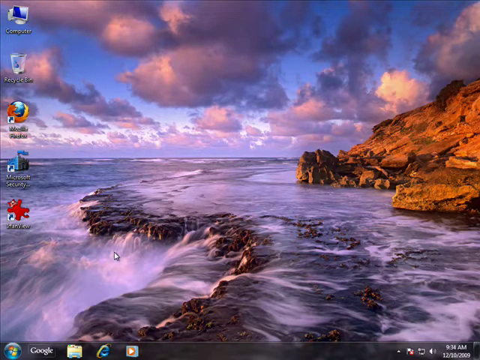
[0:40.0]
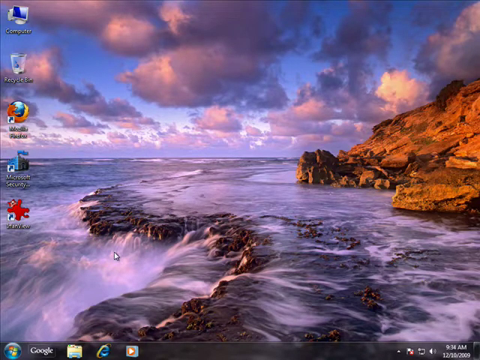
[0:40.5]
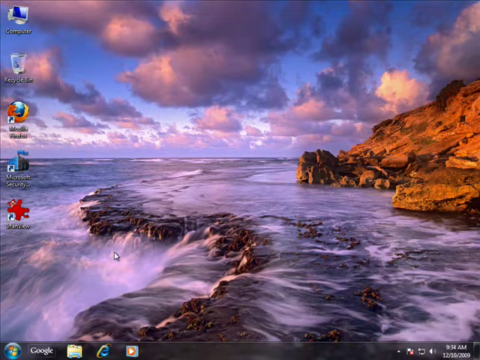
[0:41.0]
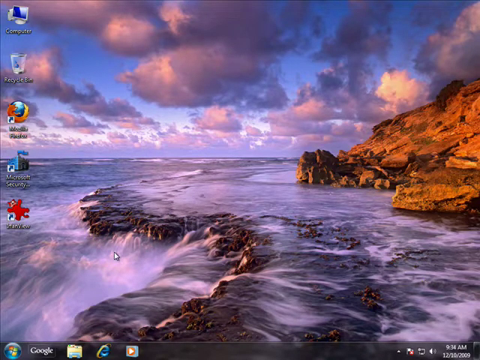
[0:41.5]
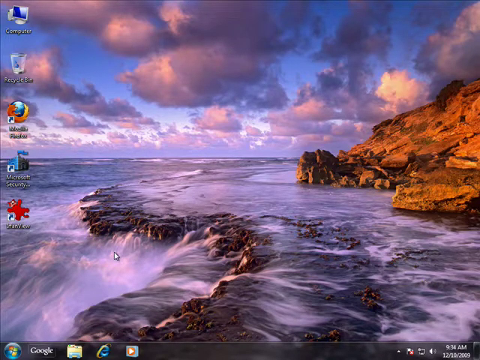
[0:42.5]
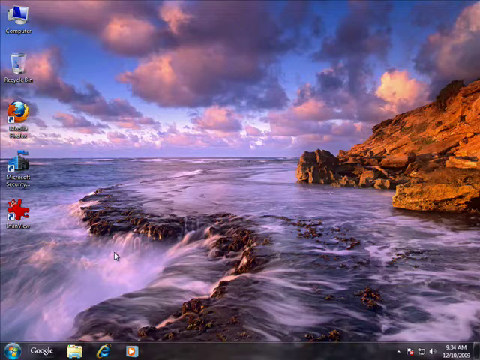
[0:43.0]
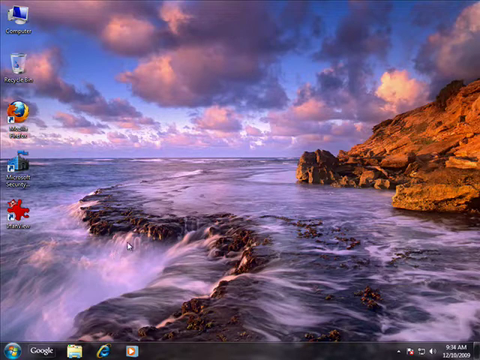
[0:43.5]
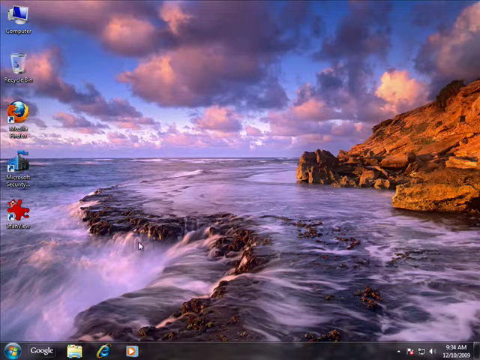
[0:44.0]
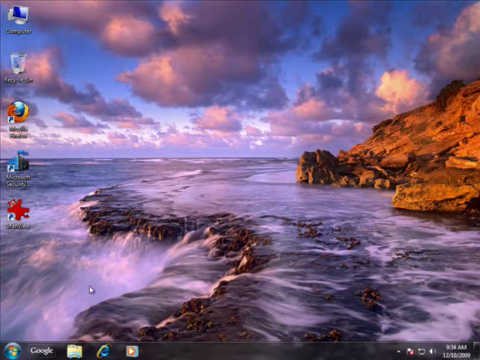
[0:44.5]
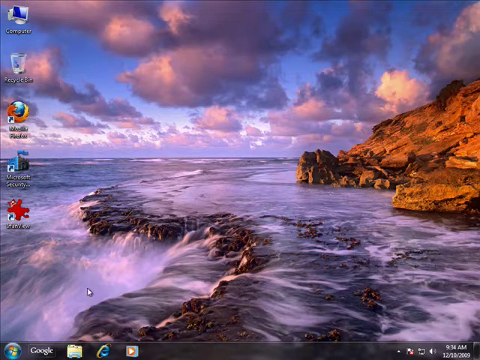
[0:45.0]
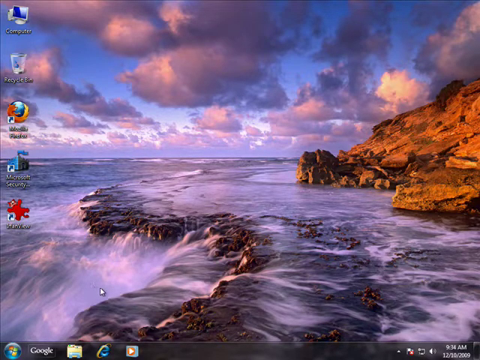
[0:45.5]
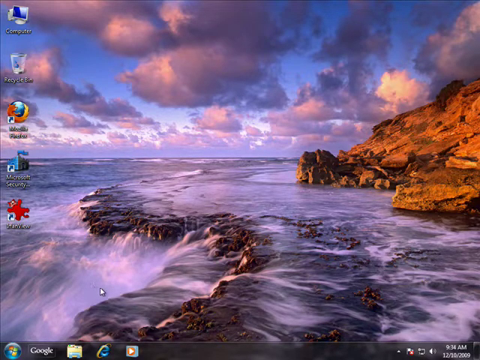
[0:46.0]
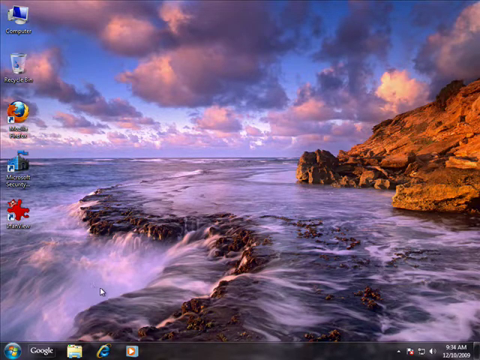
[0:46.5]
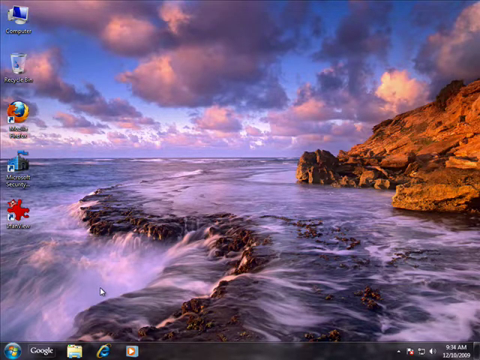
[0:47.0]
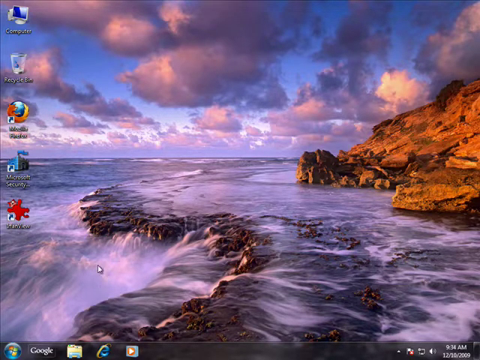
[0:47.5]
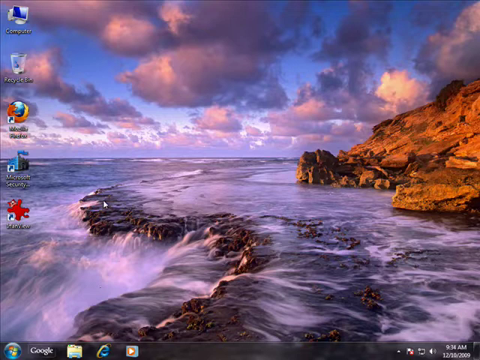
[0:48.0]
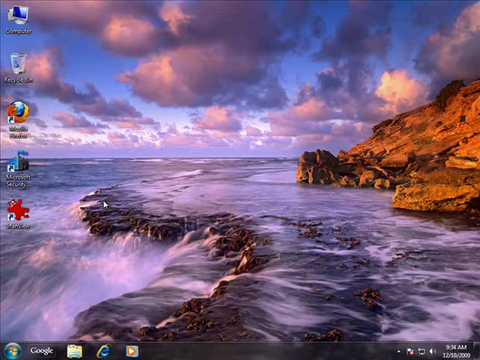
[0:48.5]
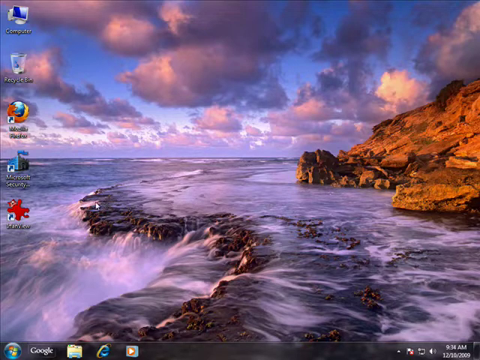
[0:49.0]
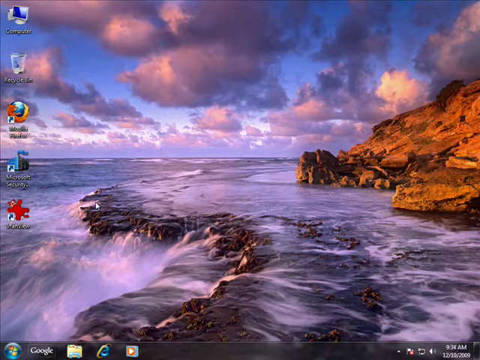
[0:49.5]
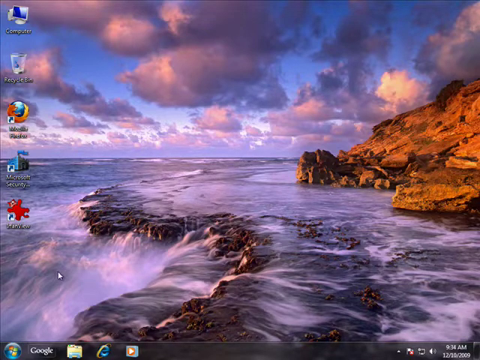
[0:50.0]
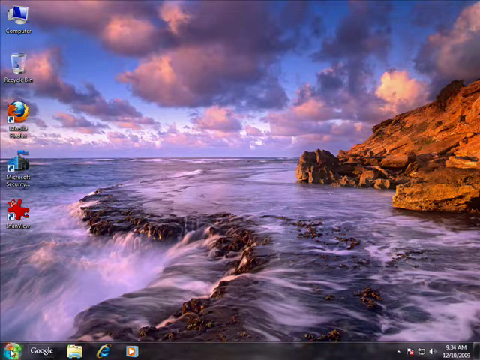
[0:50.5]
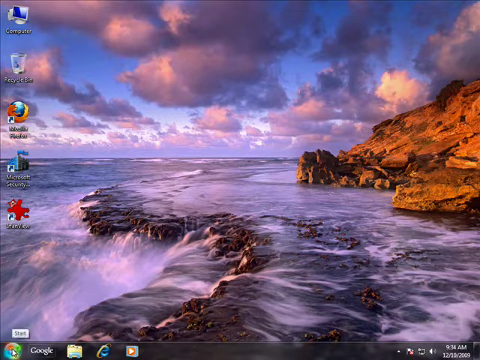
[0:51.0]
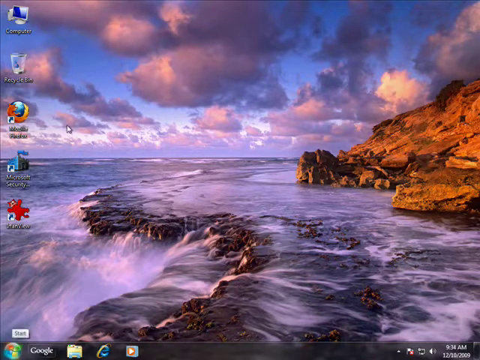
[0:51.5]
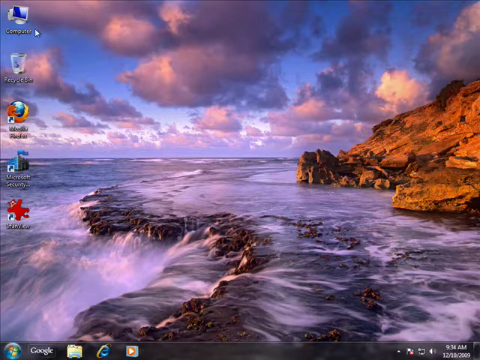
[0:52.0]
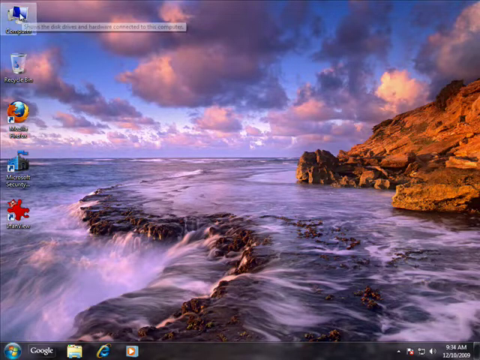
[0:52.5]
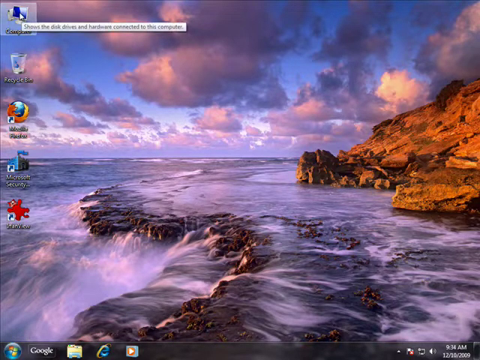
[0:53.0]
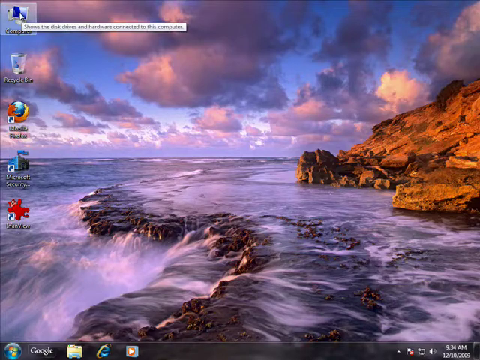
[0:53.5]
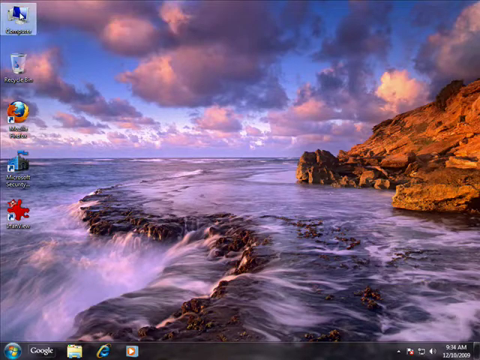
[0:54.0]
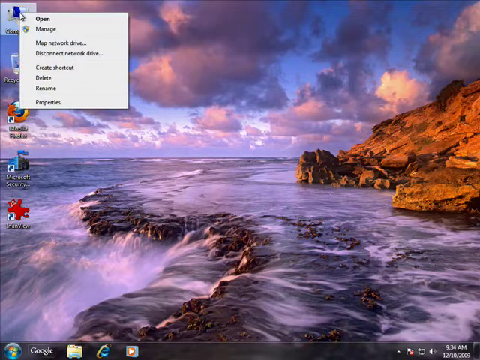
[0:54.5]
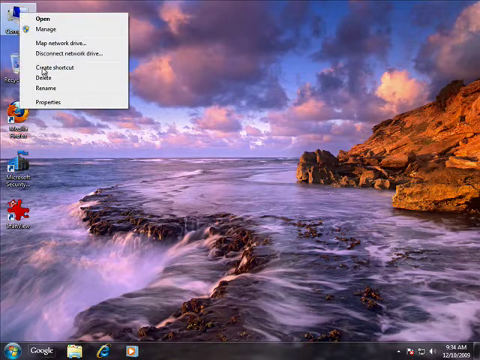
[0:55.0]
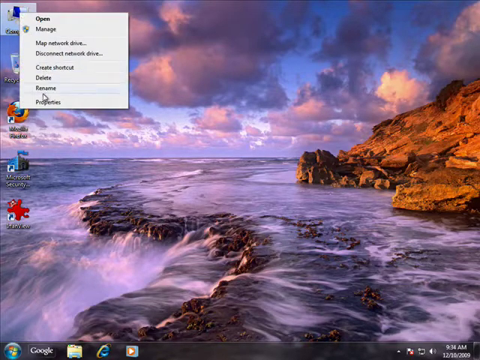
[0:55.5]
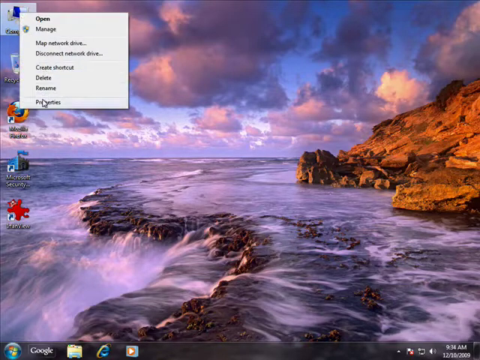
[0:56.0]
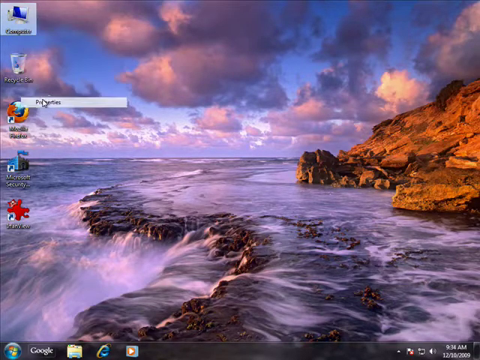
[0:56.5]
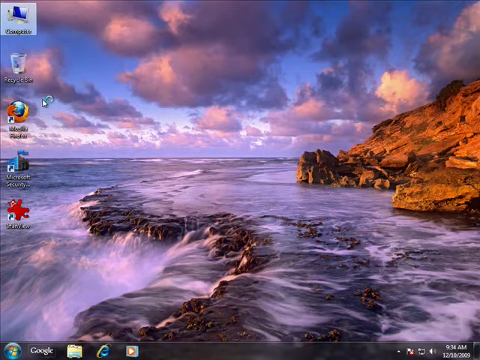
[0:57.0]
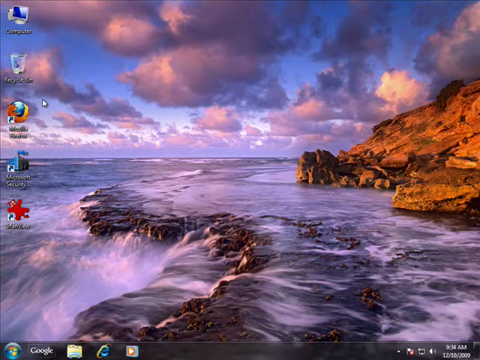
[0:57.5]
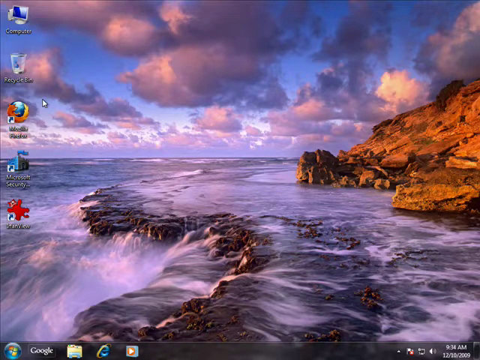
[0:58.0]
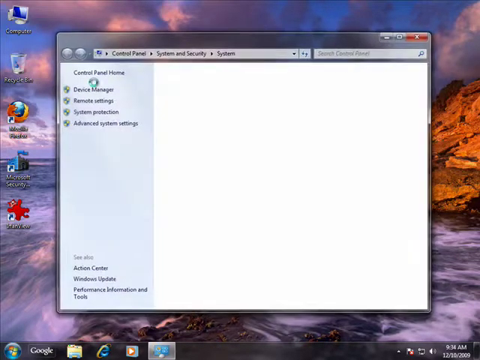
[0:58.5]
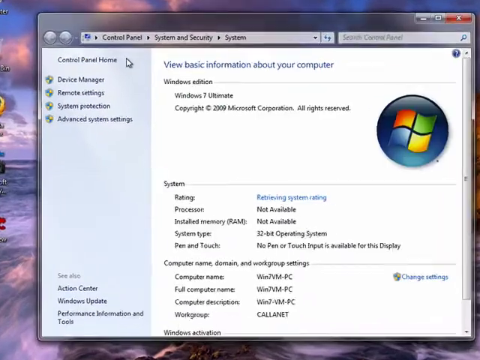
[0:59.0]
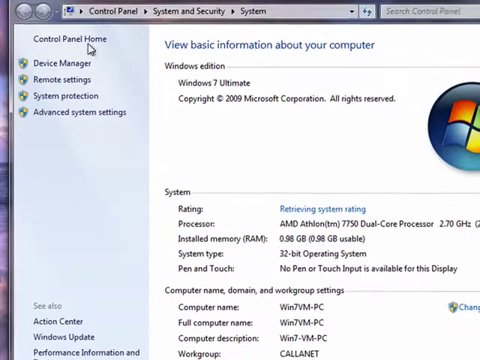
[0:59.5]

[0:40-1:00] The desktop shows a blue sky and blue water, contrasting with the brown canyon on the right-hand section of the screen. The person opens various sections, such as a control panel.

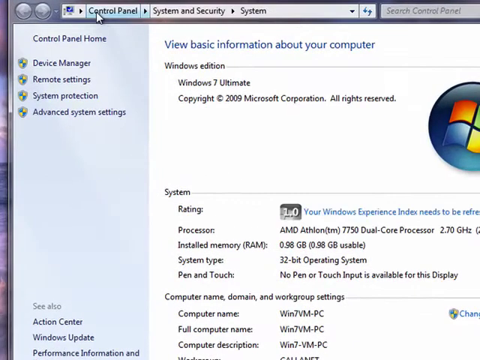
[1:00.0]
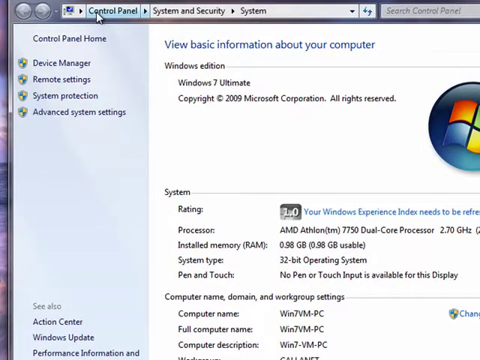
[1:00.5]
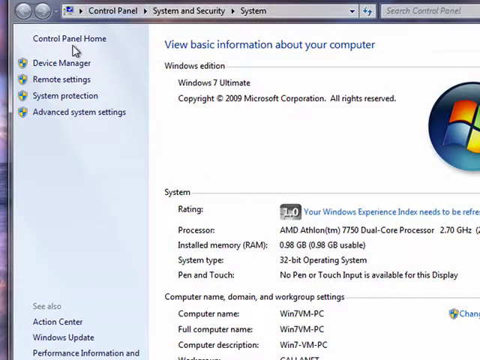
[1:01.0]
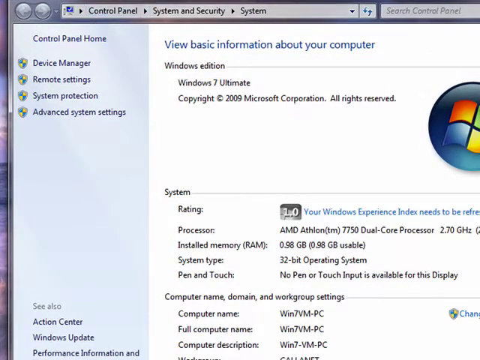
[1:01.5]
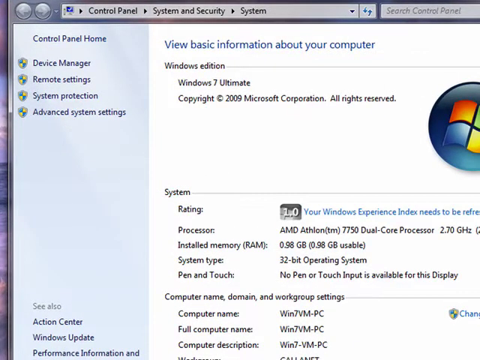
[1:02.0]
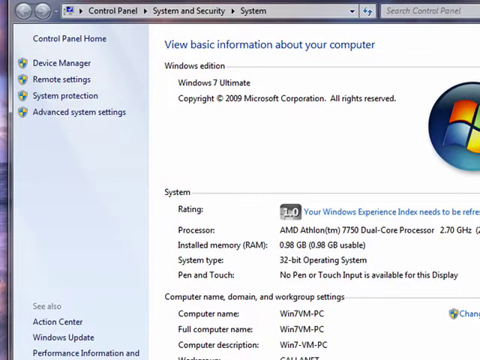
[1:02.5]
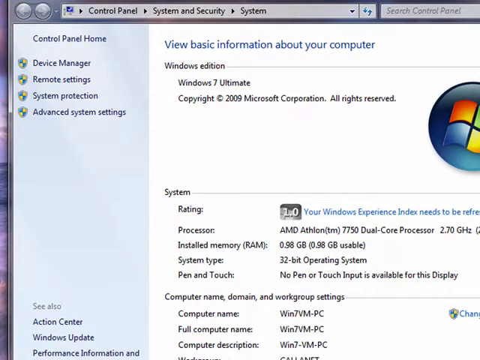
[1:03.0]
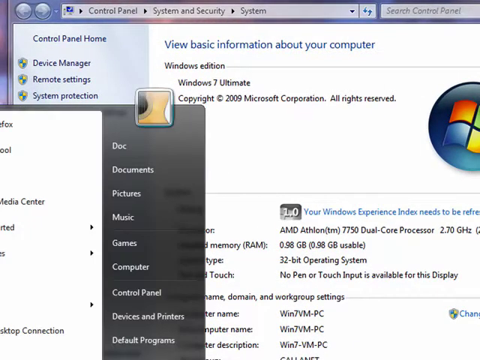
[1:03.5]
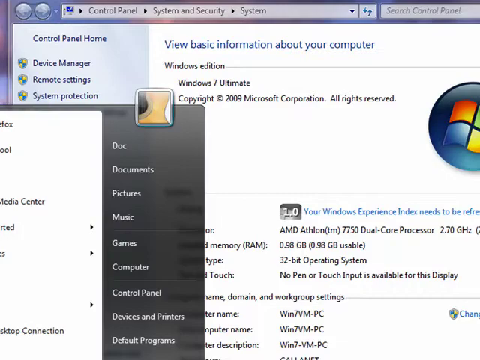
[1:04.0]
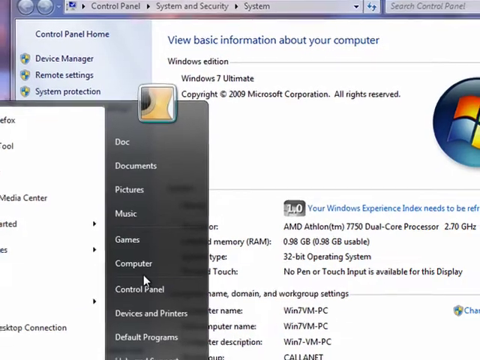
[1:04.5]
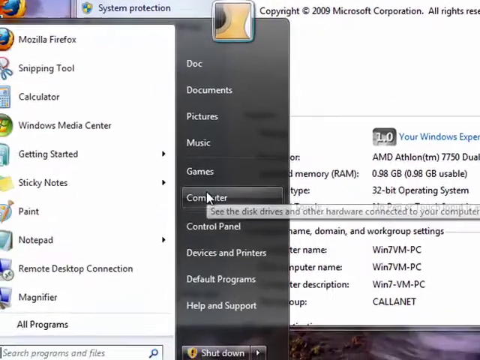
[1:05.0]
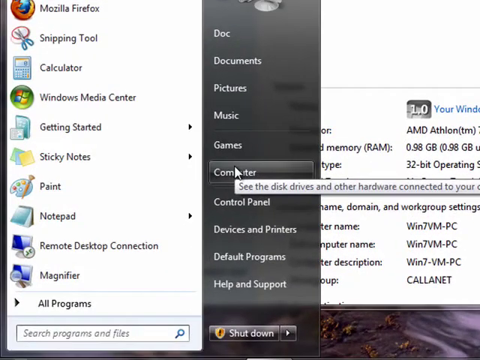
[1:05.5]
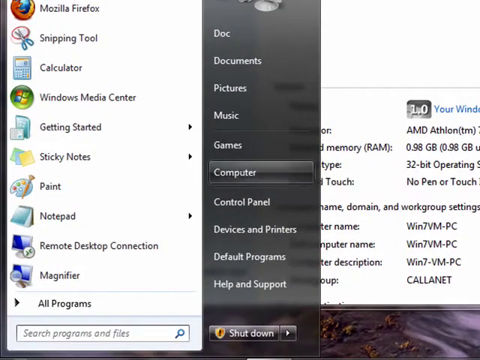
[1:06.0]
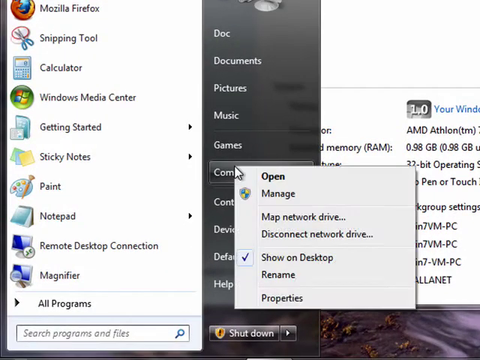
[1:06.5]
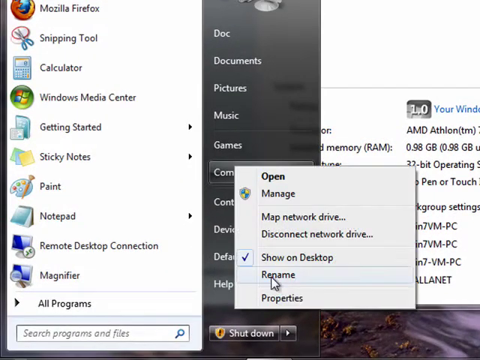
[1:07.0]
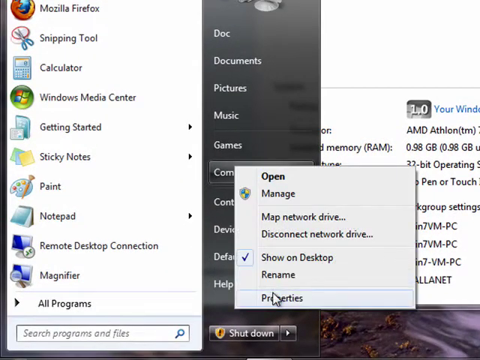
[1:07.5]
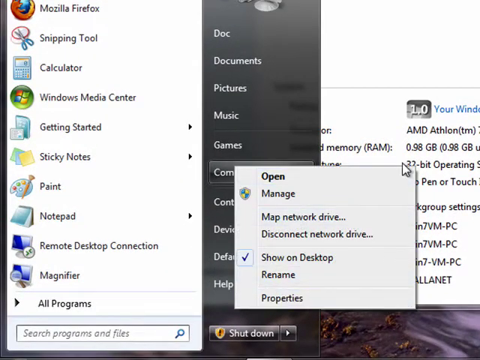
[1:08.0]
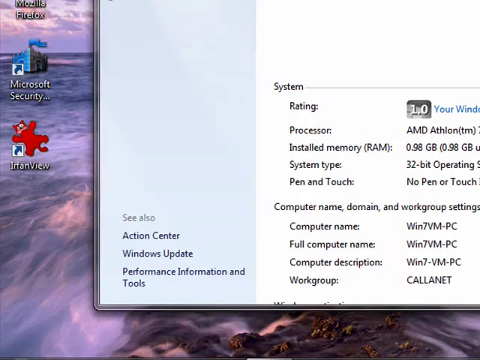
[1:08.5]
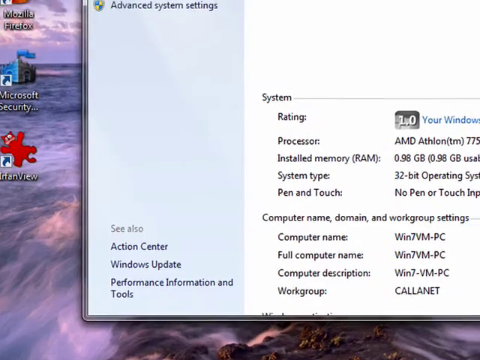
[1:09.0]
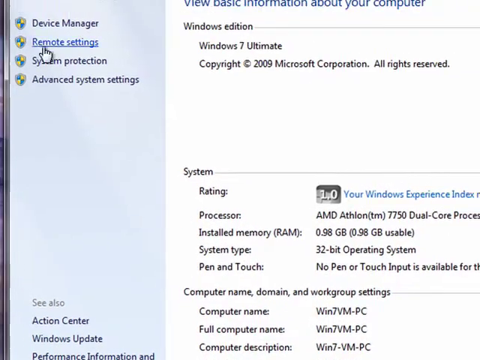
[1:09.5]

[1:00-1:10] The person sharing the desktop screen opens the properties section of his computer and then goes to System, Protection, and Control Panel, moving quickly from step to step.